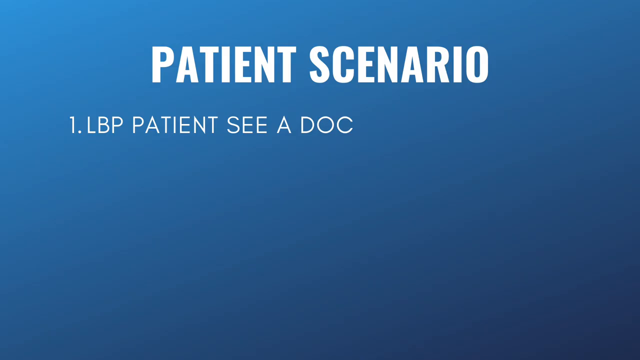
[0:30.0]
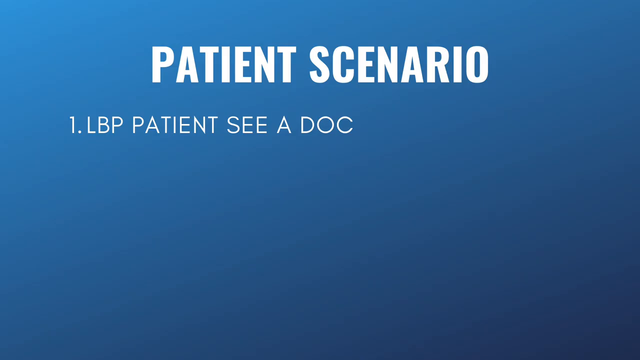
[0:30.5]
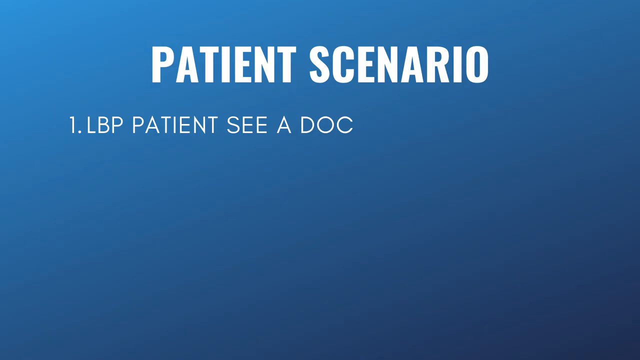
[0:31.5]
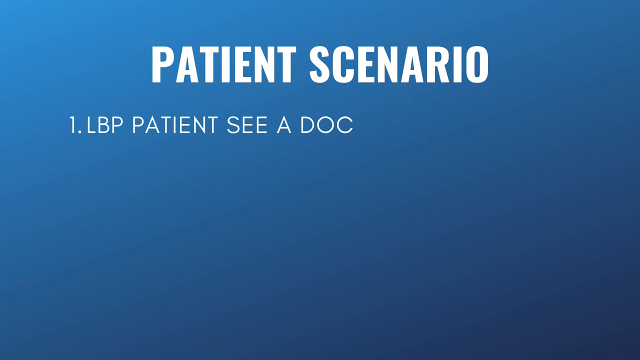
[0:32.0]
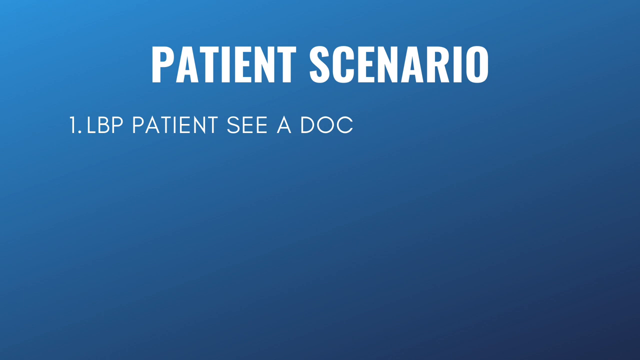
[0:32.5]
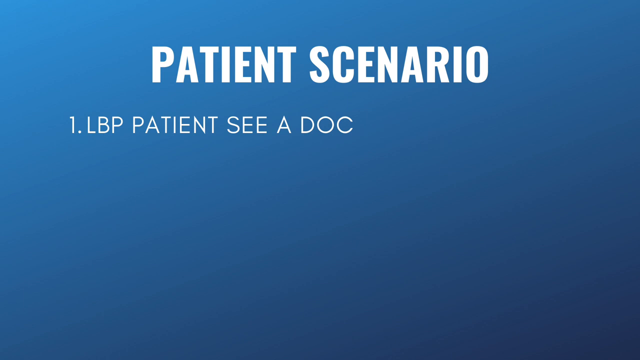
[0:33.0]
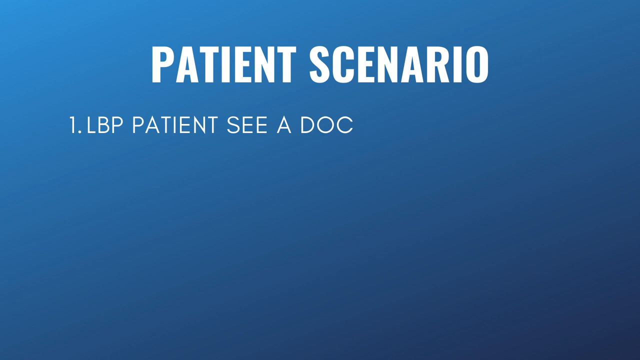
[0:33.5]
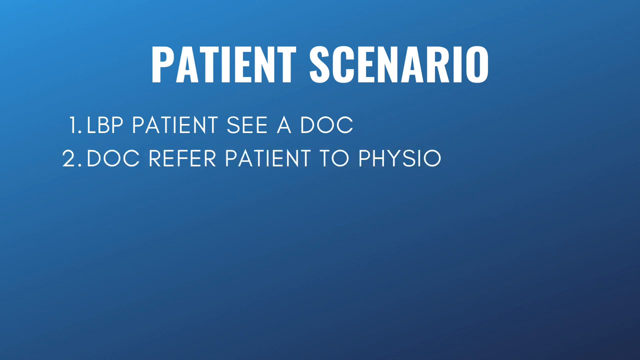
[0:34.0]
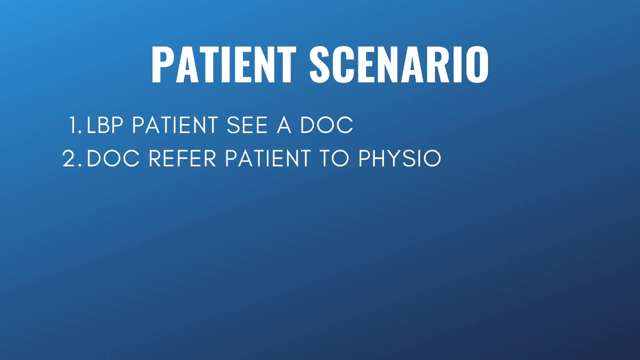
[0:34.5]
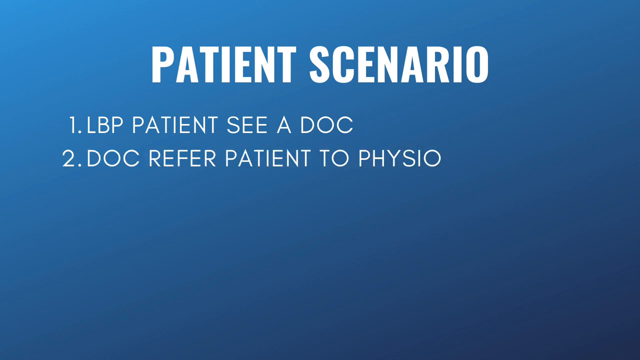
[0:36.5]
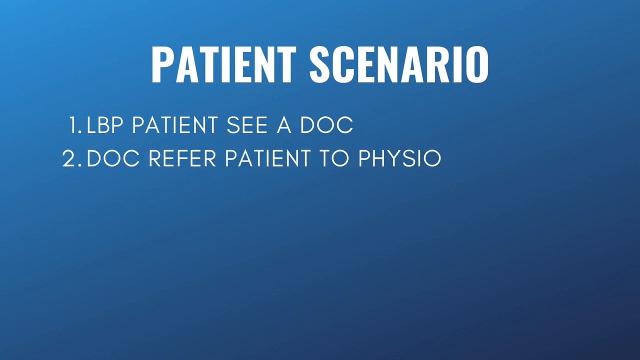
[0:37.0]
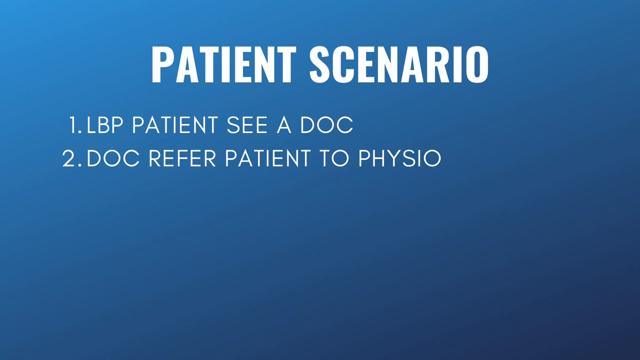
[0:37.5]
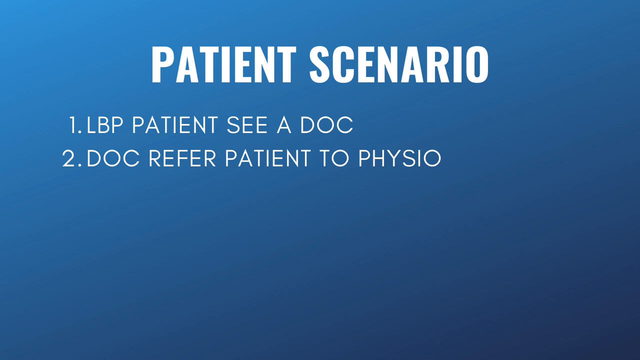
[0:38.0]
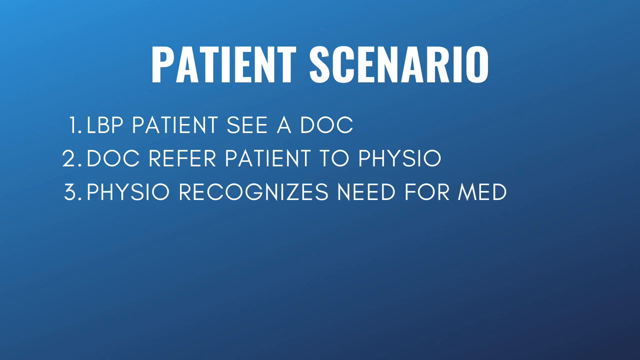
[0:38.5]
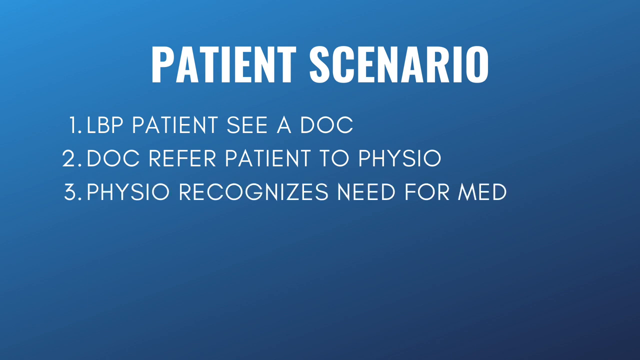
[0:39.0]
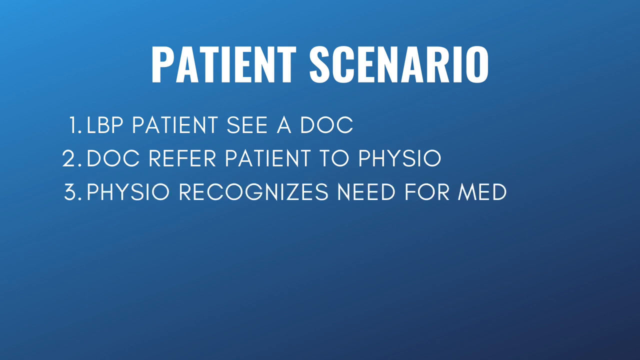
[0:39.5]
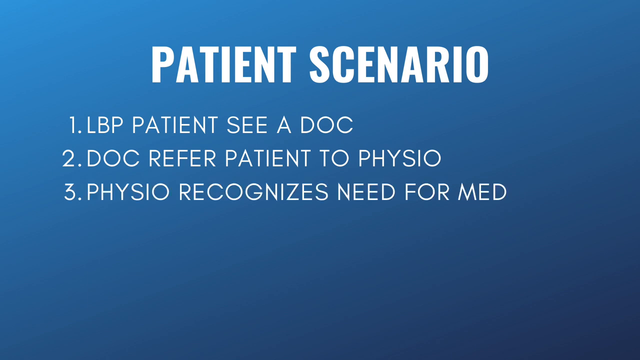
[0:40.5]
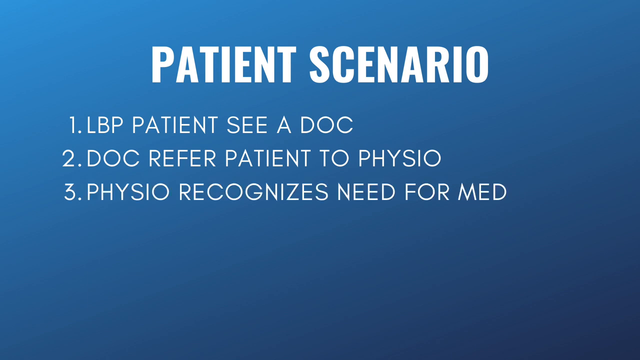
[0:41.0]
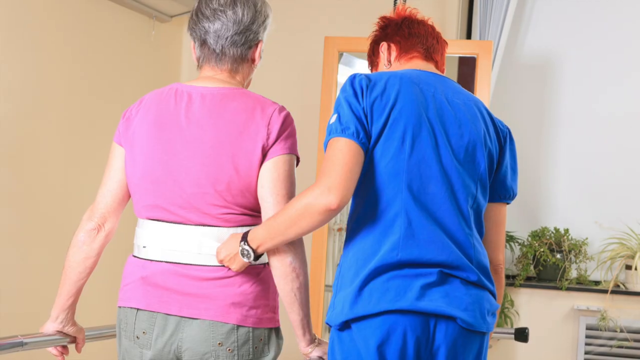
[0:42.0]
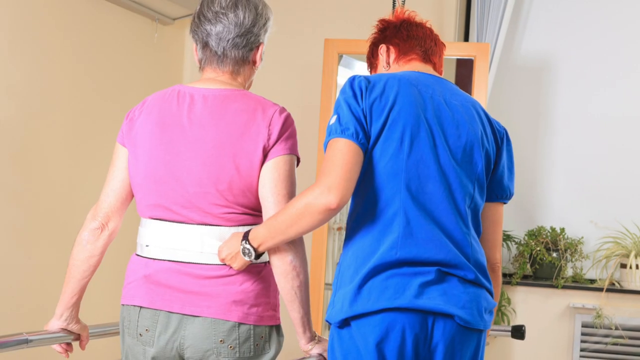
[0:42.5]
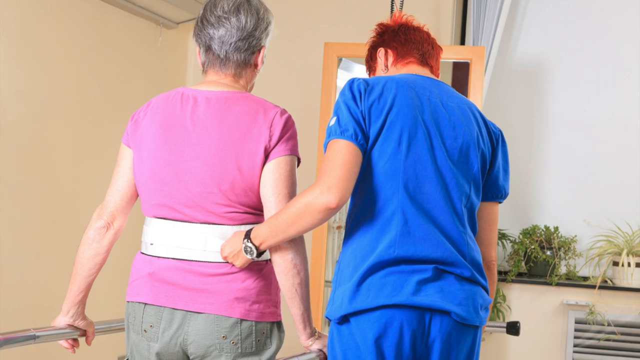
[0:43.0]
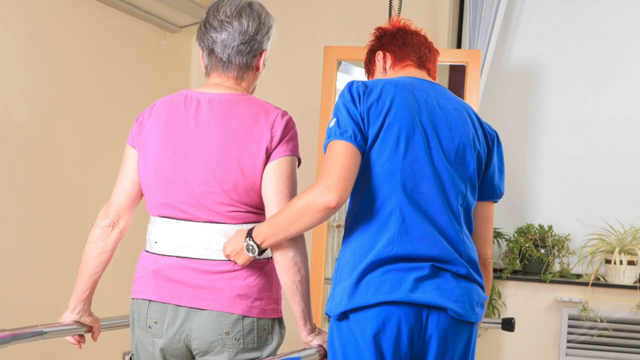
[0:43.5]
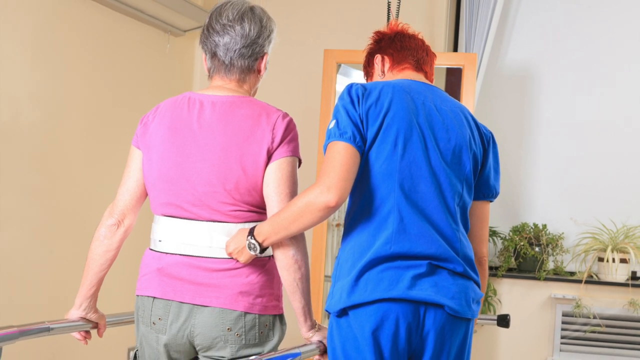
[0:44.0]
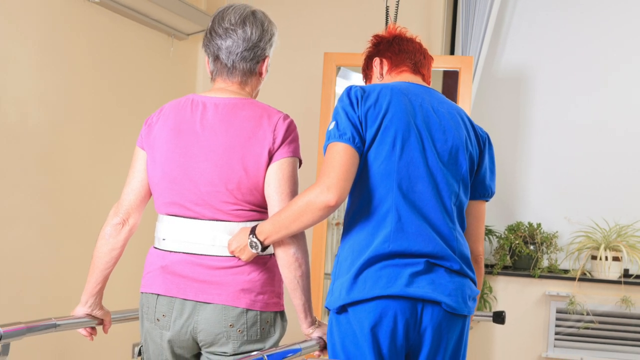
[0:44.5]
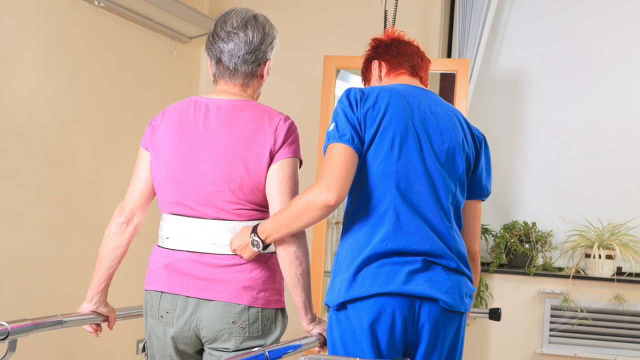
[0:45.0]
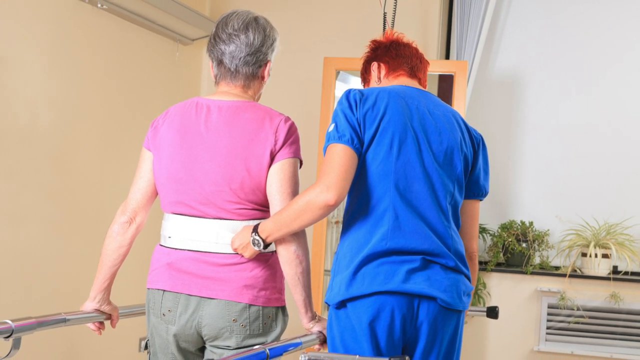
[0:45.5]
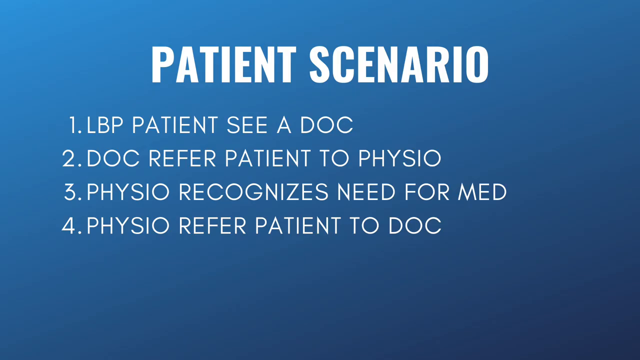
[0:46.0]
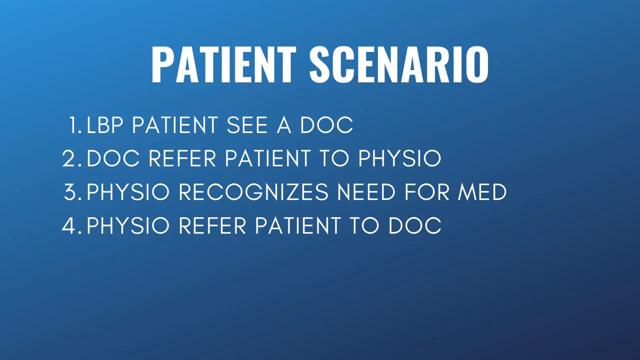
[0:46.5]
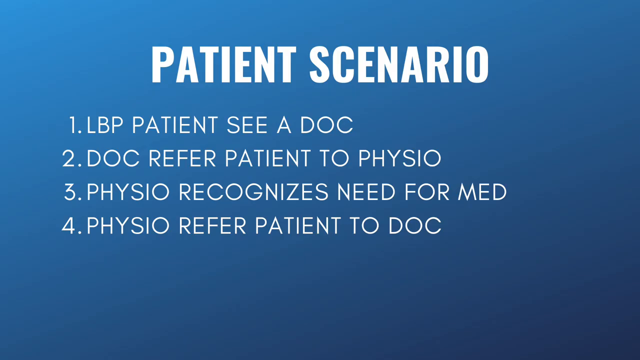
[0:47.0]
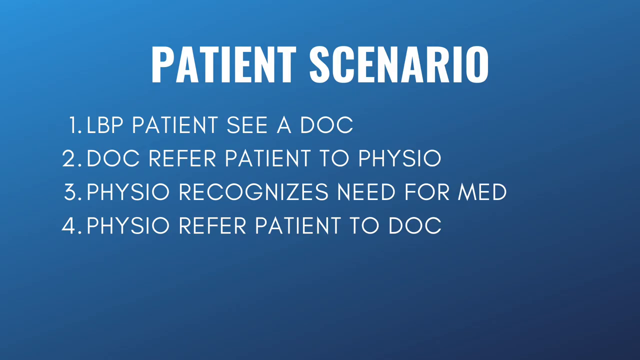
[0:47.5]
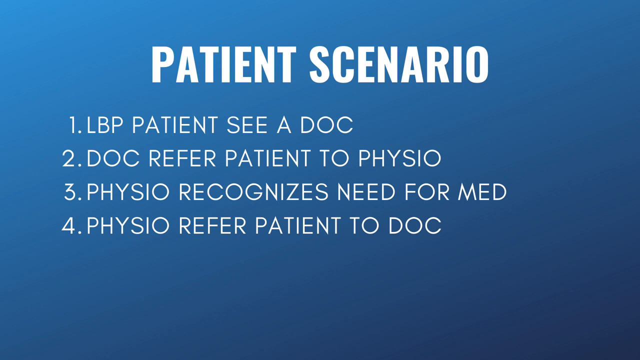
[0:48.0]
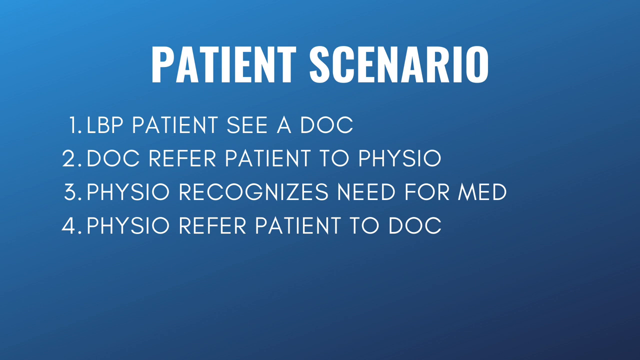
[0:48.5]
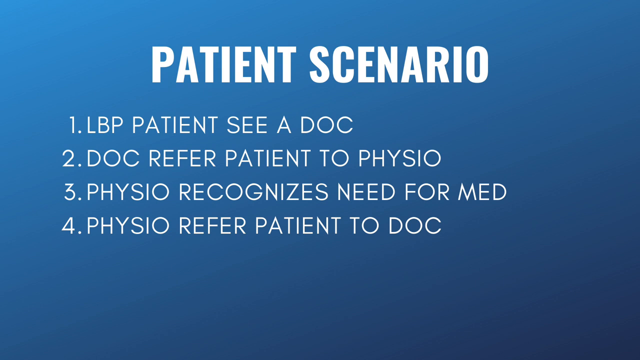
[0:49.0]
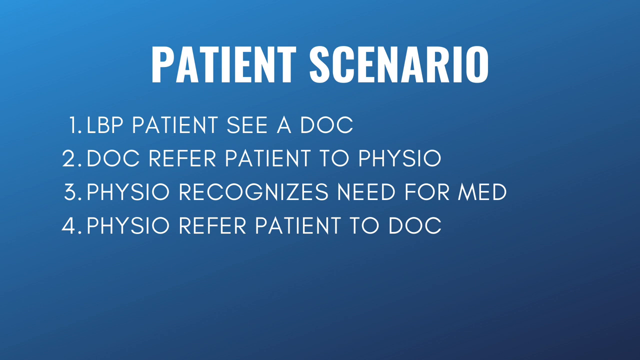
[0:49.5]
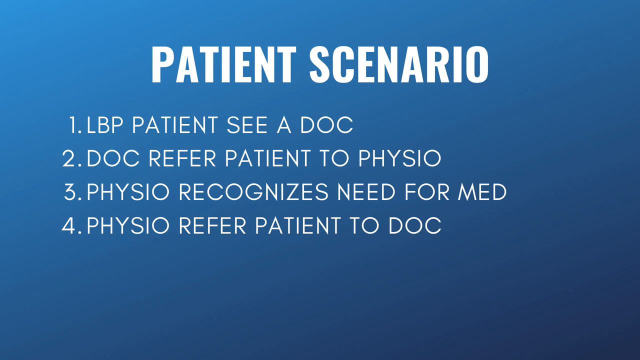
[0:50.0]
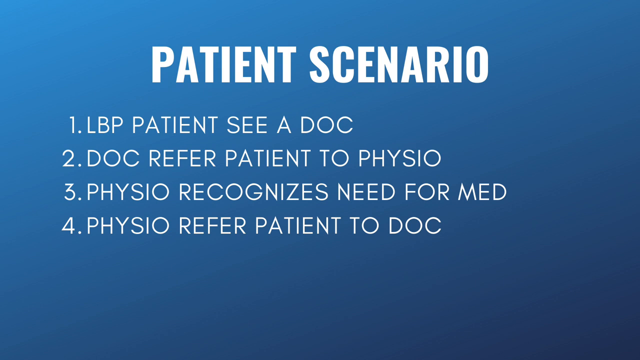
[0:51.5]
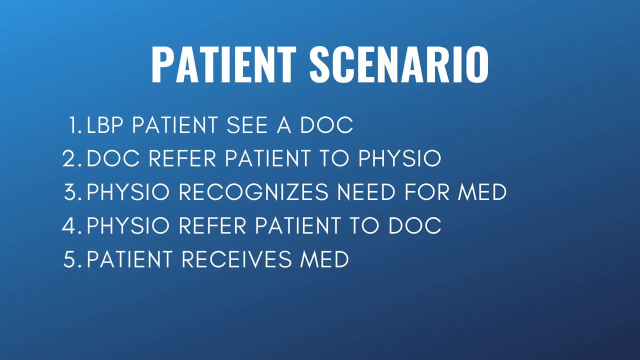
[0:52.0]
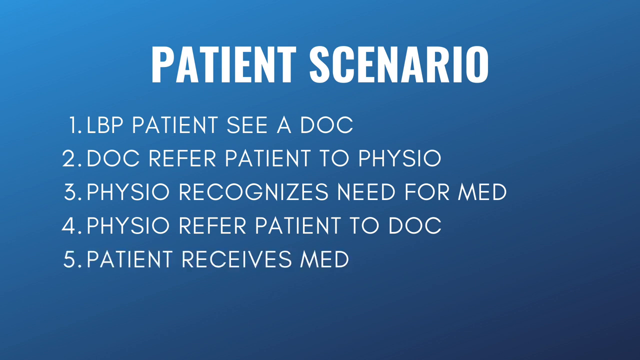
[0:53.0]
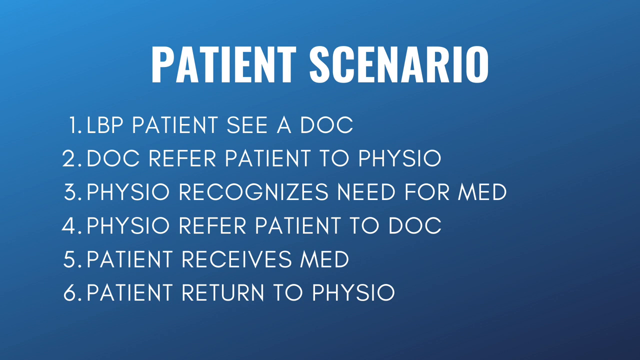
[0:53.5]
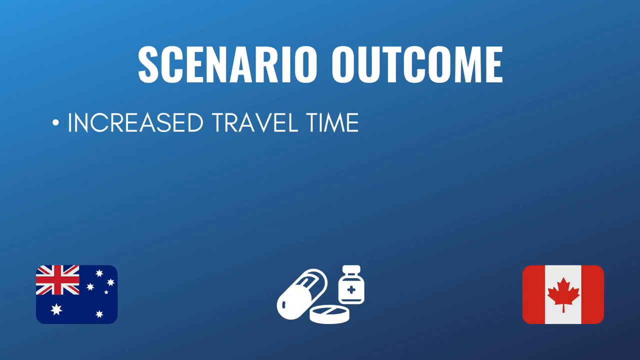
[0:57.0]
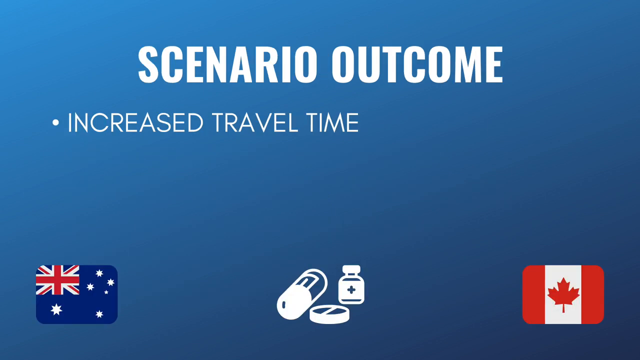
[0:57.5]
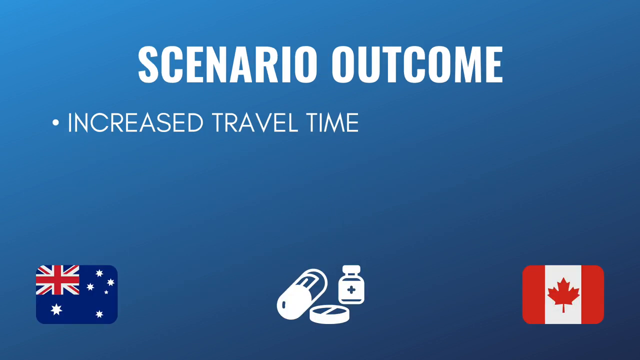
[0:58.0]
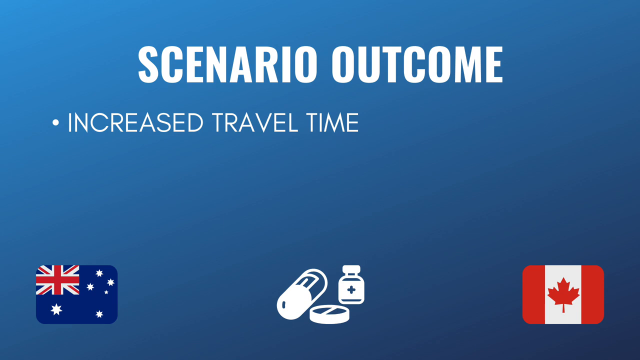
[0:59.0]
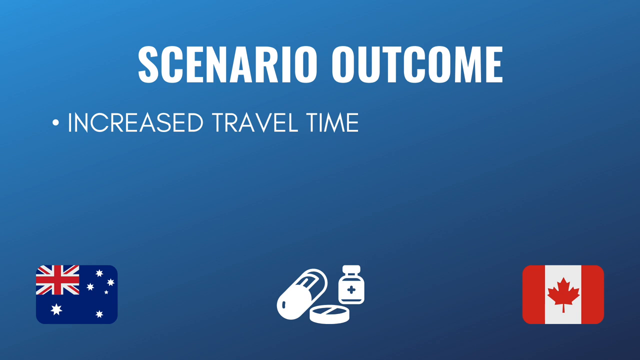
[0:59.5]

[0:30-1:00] Text in white says "patient scenario," followed by "1. LBP patient see a doc," "2. doc refer patient to physio," and "3. physio recognizes need for med." A picture shows a nurse or physio on the right with her left hand on the lower back of an older lady. The nurse wears blue scrubs, has short bright red hair, and wears a wristwatch with black straps and a silver face on her left wrist. Some plants are on a shelf to the right of the lady in blue. The older lady wears a short-sleeved pink shirt, has a thick white band or strap around her midsection, and has short silver-gray hair. Both women are Caucasian. The video cuts back to the list: "4. physio refer patient to doc," "5. patient receives med," "6. patient return to physio." Then text reads "scenario outcome," "increased travel time," "increased consultation fees."